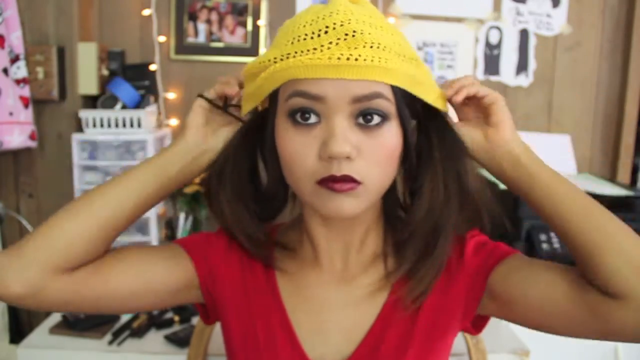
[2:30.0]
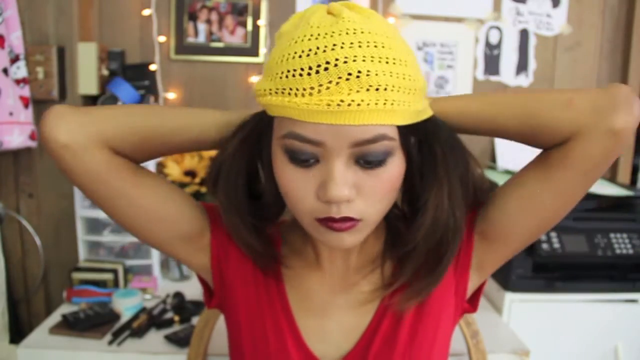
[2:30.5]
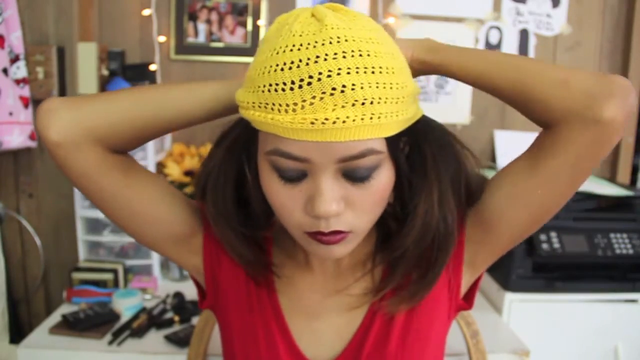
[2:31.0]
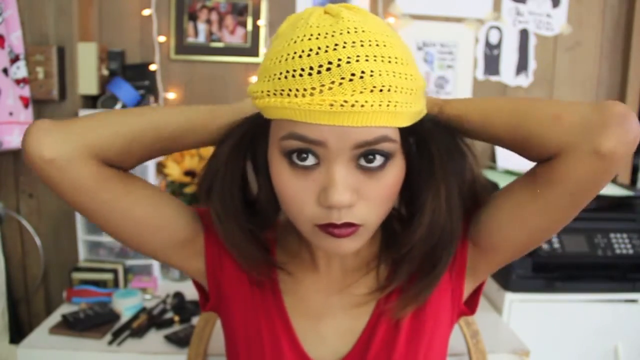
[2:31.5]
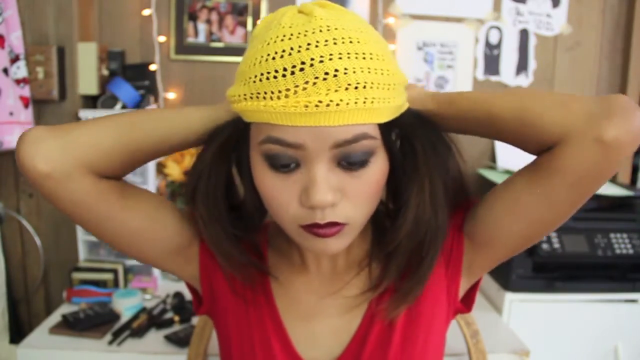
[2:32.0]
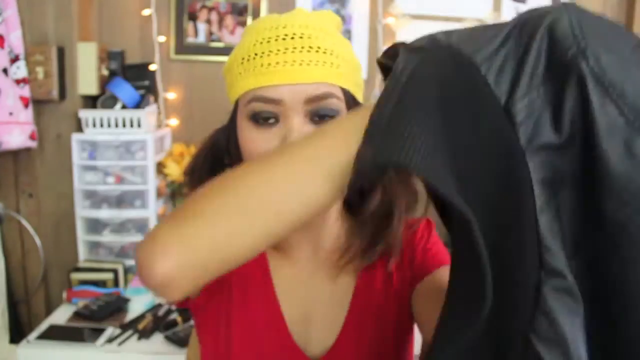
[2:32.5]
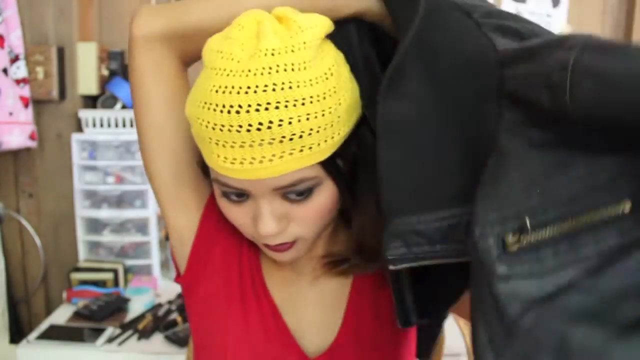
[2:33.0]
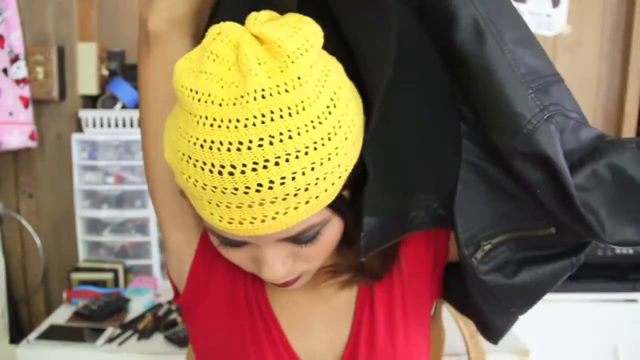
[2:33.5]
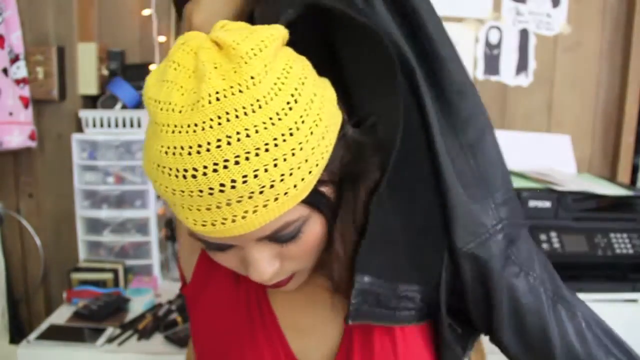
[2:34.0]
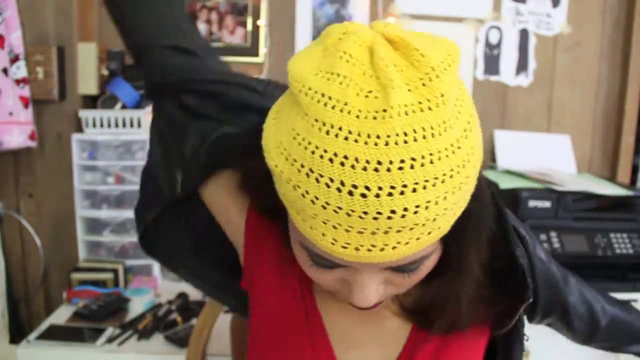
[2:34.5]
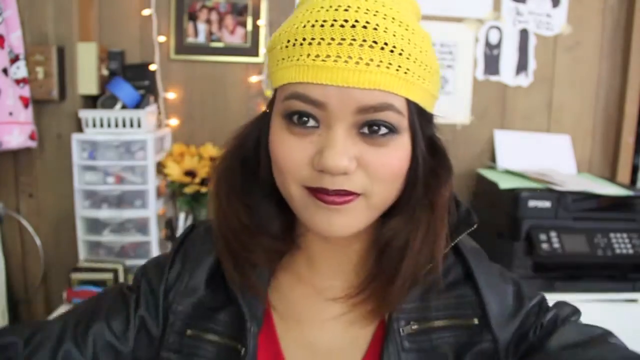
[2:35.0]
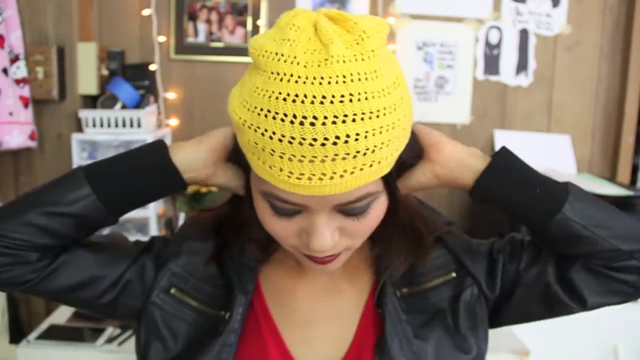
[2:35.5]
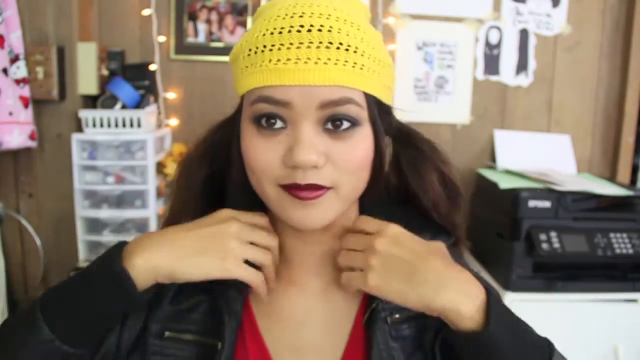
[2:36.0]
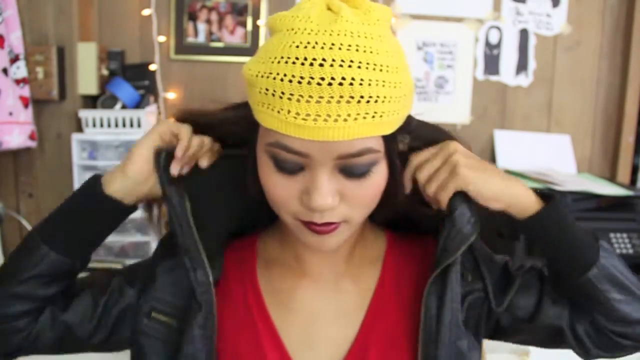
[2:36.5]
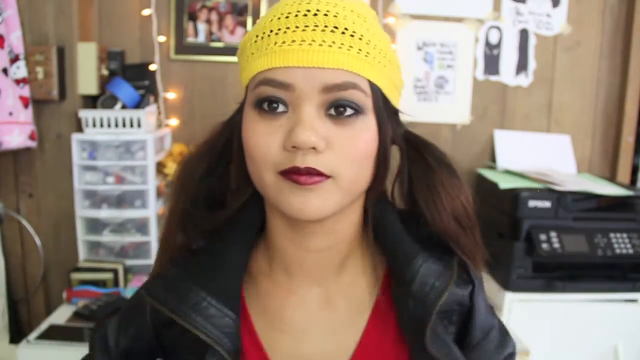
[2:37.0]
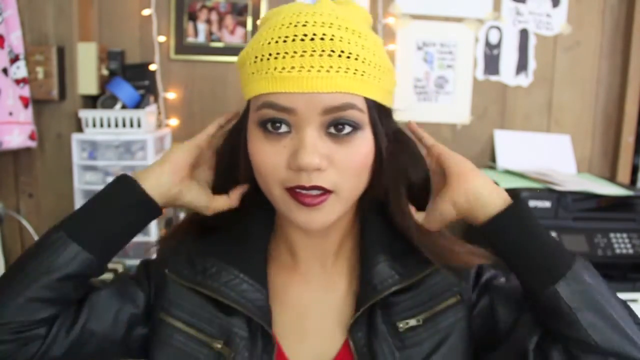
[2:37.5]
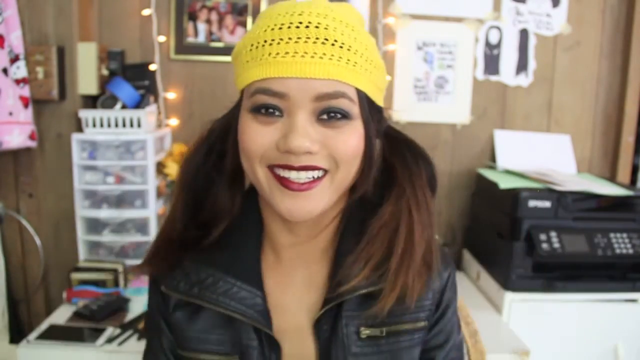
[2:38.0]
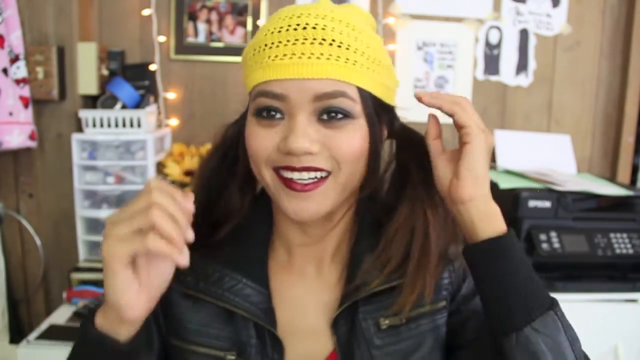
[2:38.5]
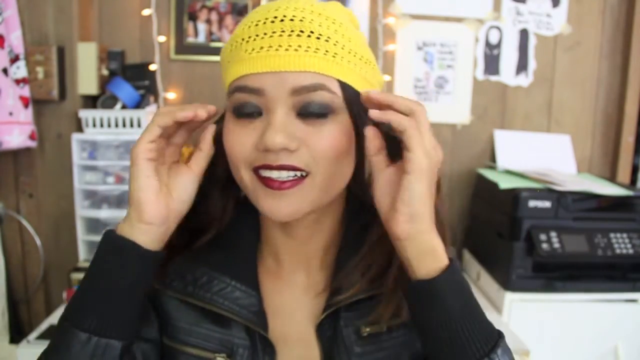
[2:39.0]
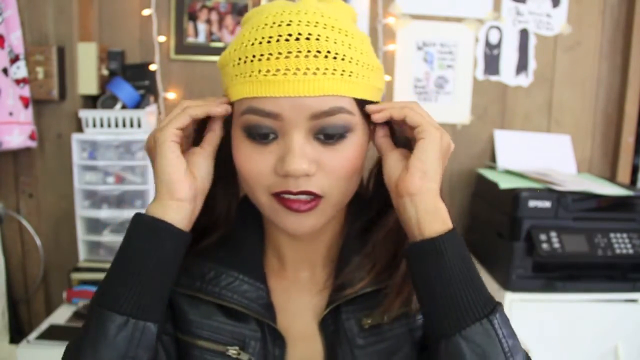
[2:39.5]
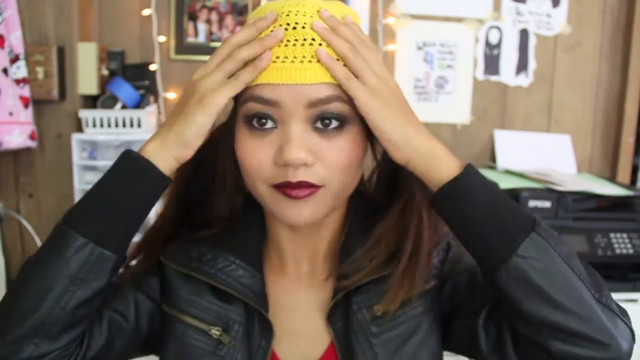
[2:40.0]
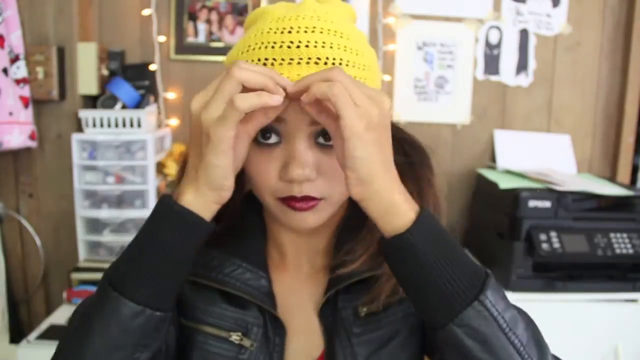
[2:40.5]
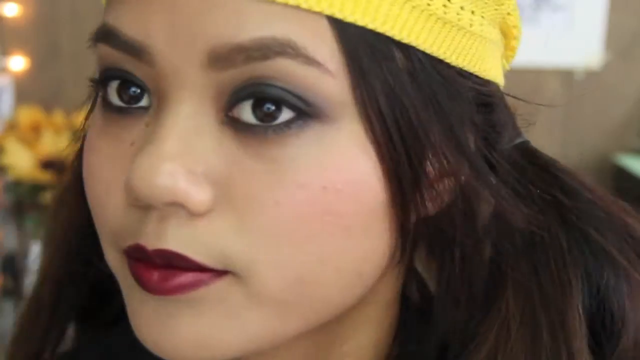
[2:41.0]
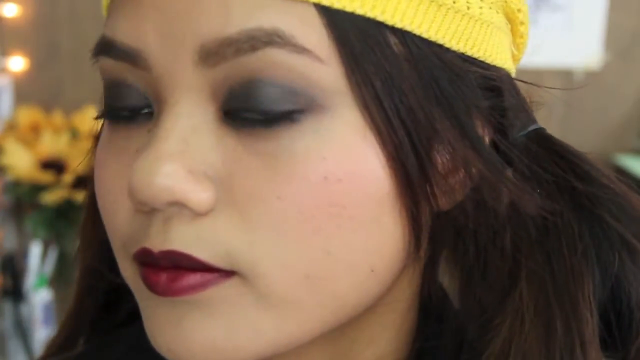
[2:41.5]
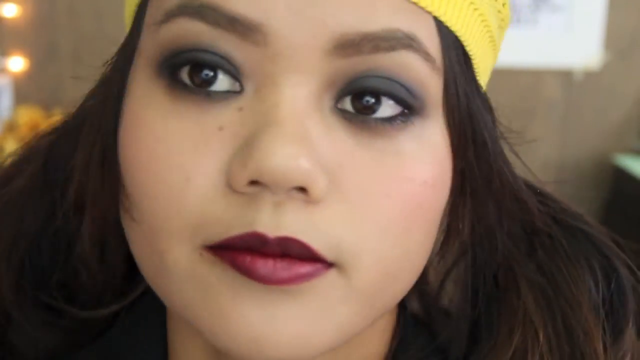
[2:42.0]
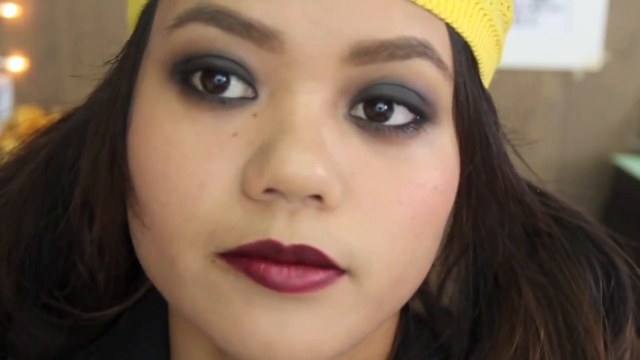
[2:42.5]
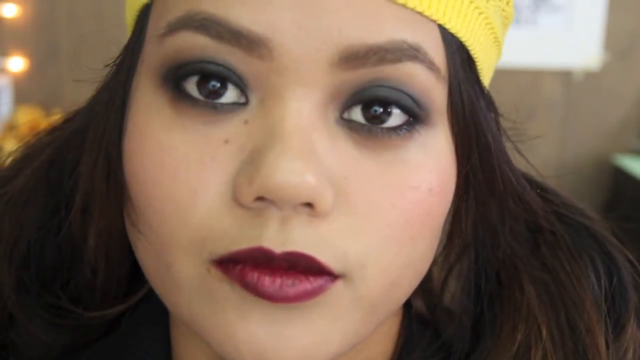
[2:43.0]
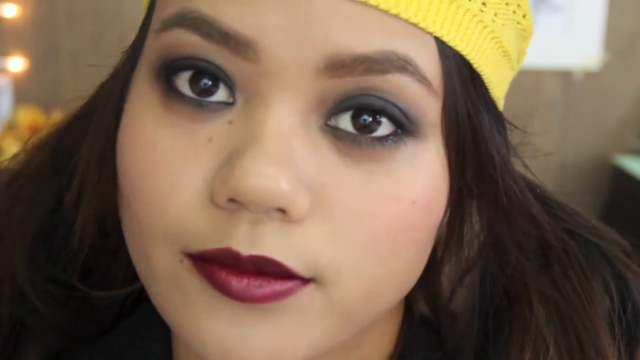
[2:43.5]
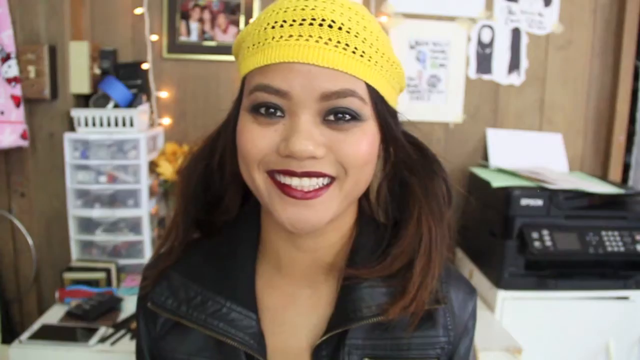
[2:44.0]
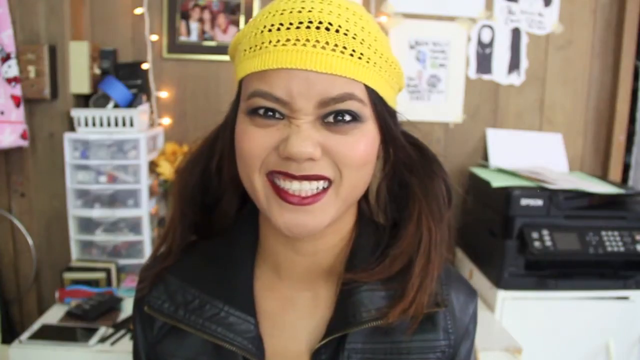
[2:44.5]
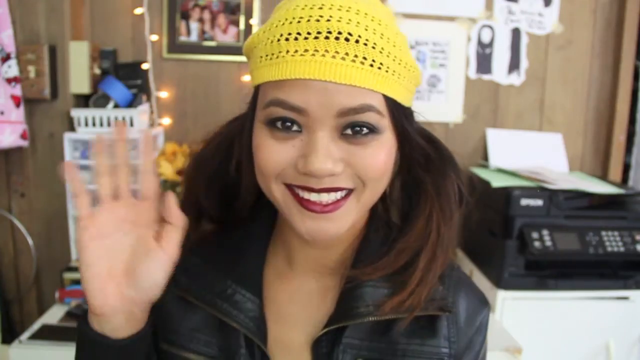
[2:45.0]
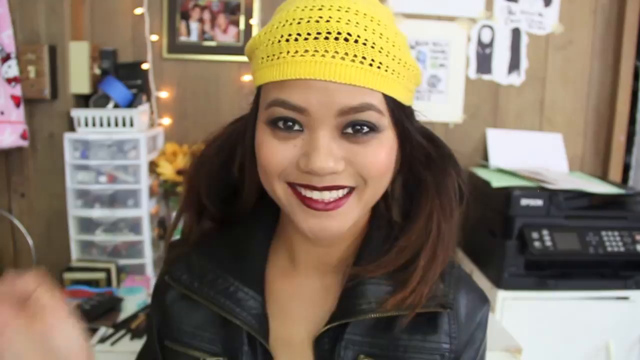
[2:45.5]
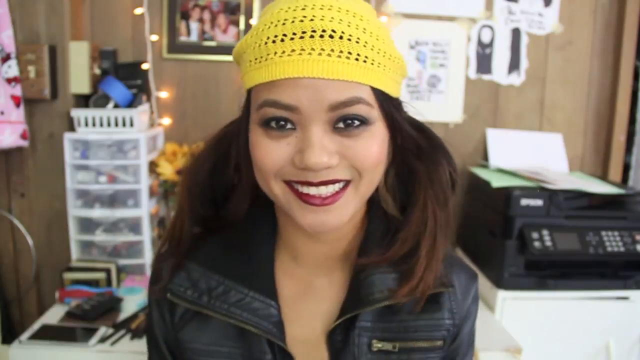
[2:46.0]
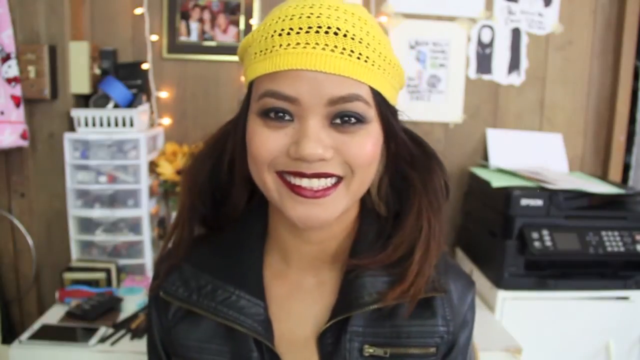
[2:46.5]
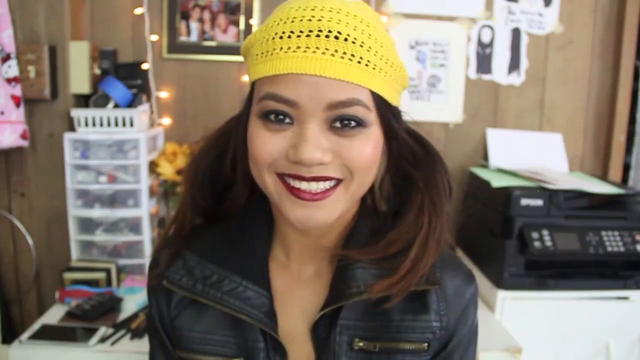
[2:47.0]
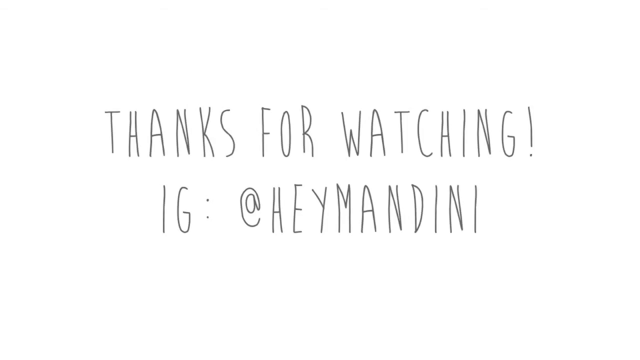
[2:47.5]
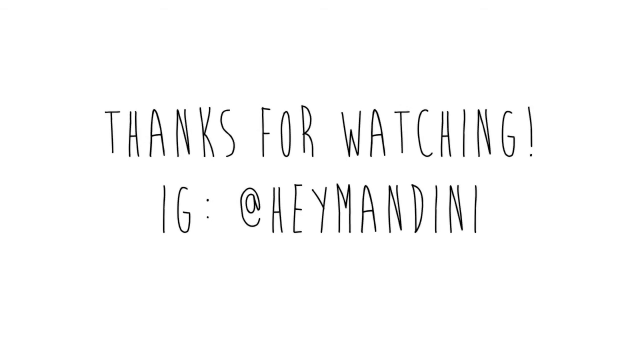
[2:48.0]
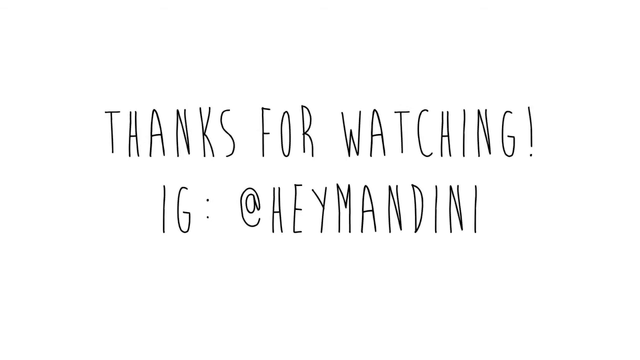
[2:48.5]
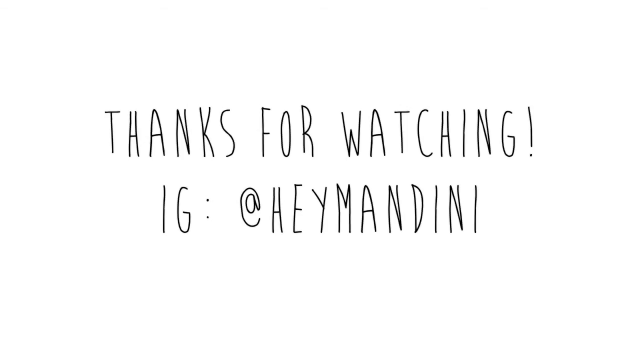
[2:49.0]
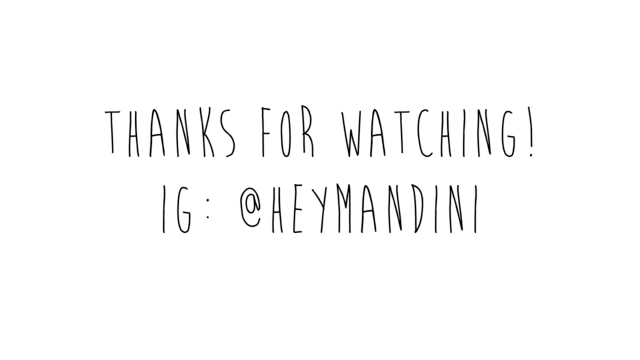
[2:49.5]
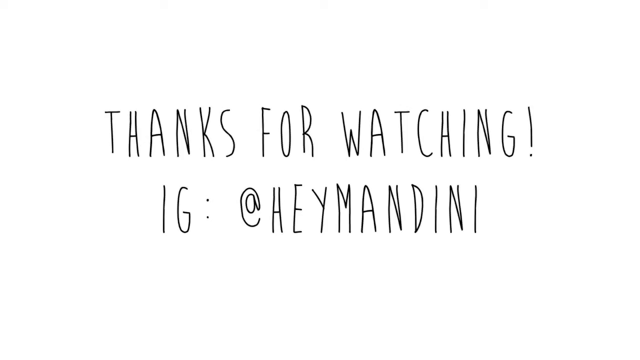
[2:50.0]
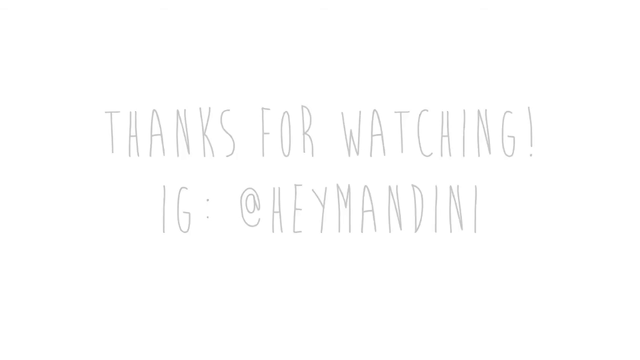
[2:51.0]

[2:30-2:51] She fixes her hair and puts on a jacket. A "thank you for watching" message appears, and she shows her IG. The makeup is simple.